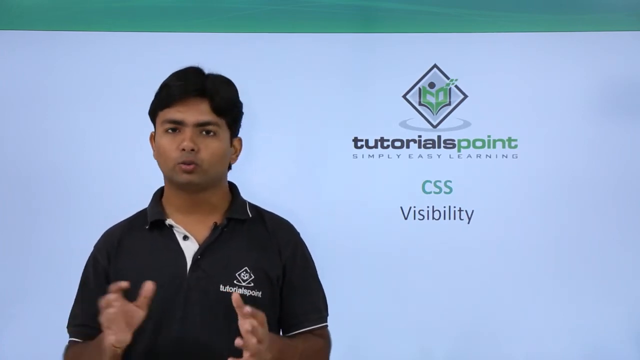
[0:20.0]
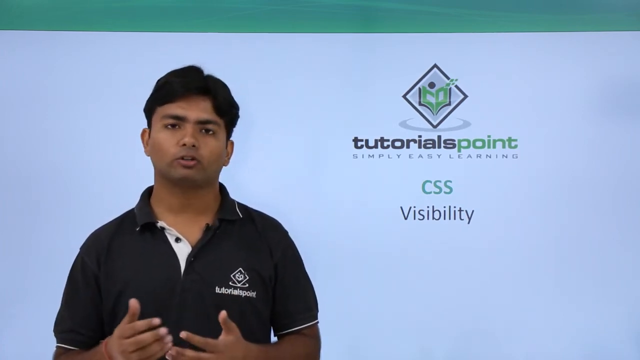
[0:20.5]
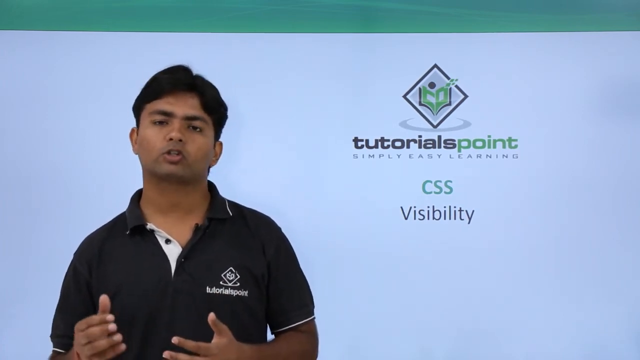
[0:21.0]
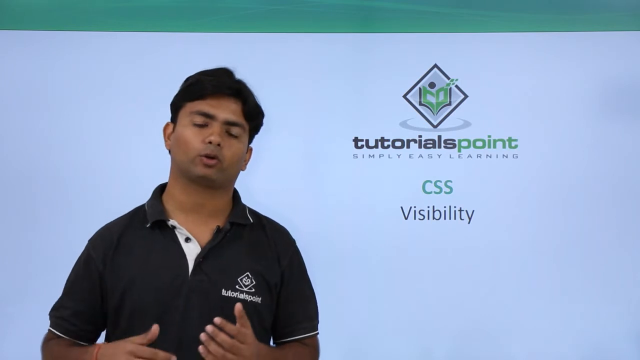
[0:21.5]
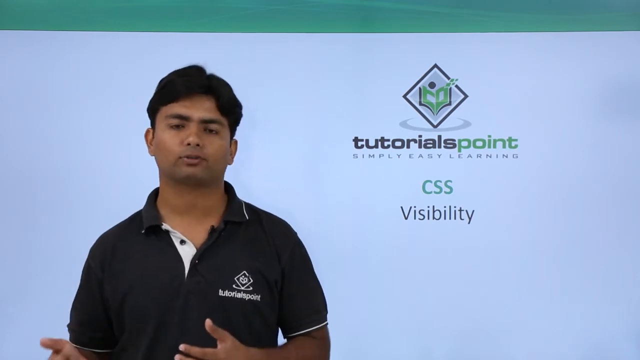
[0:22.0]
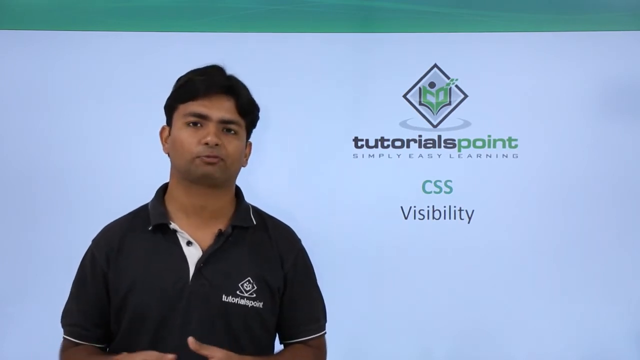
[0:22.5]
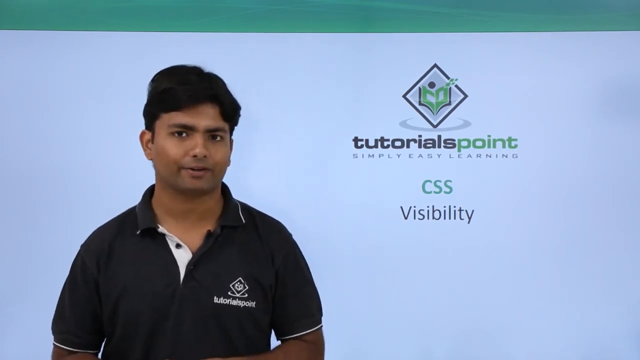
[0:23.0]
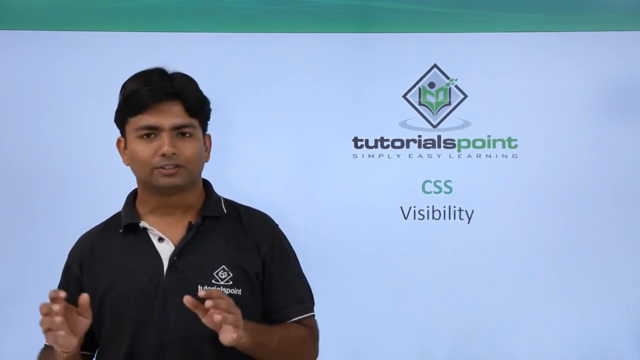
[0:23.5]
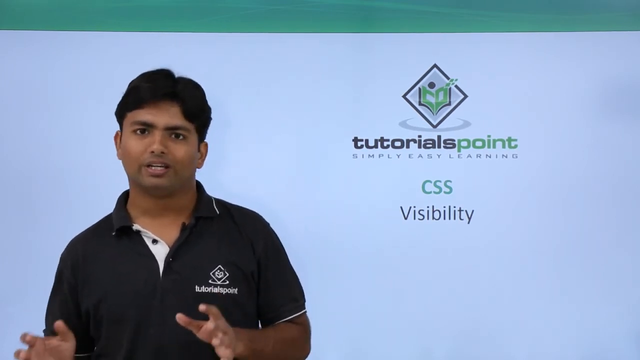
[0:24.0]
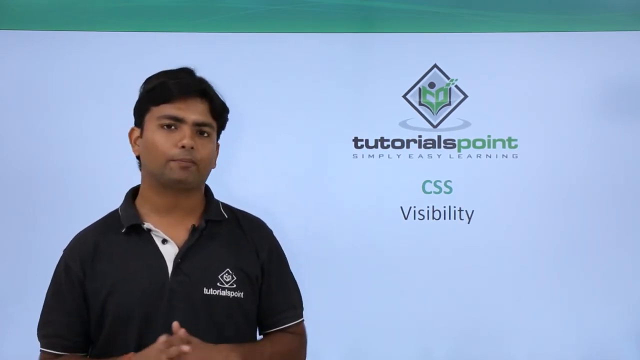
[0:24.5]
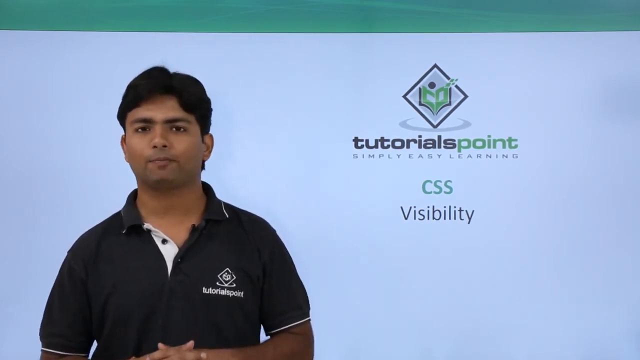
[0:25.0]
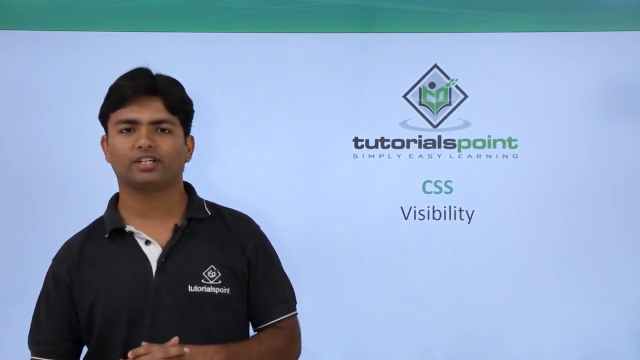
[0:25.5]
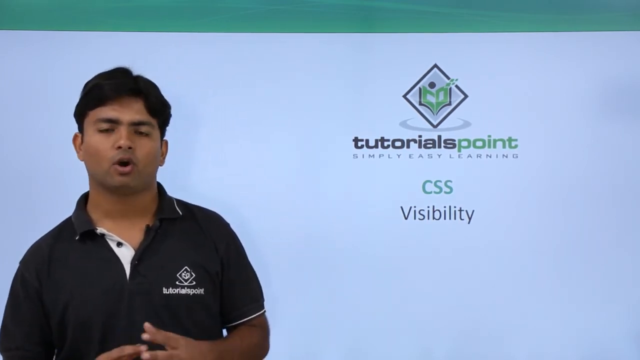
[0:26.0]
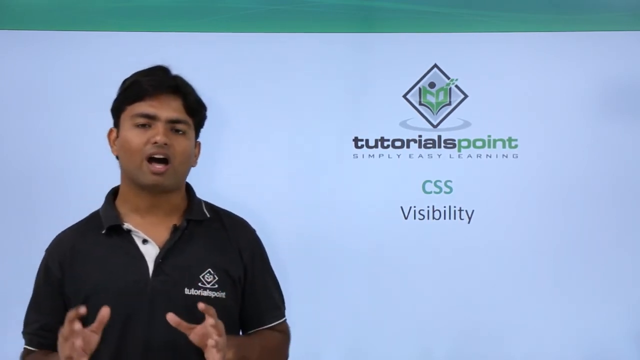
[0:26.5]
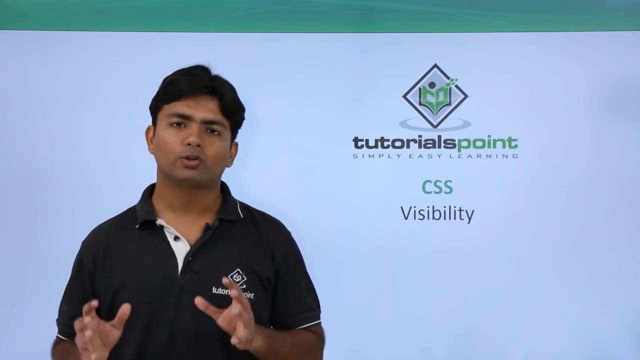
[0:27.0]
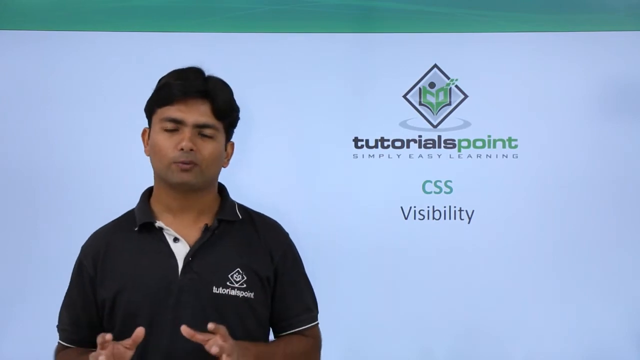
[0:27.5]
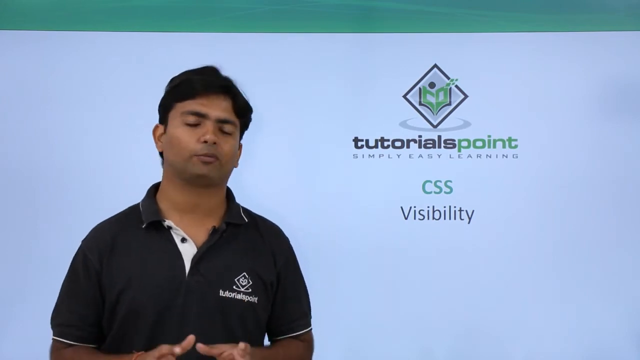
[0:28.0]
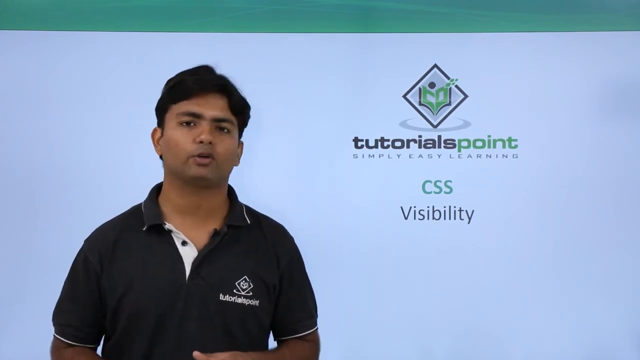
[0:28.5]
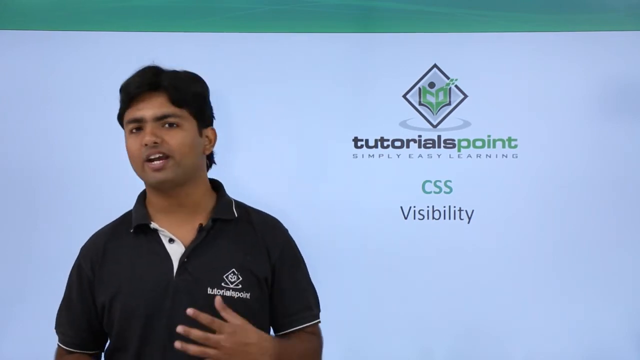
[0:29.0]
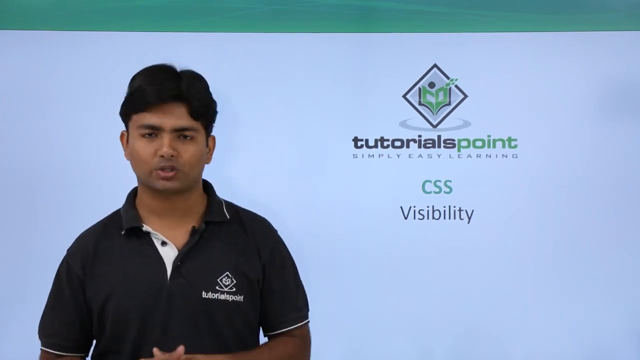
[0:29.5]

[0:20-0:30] The East Indian man, probably male and around age 20, has short black hair and a black shirt. A blue screen describing tutorials is shown, then a transition to the code editor screen. The screen then changes to a basic static screen, with the man continuing to appear to talk about the tutorial topic.